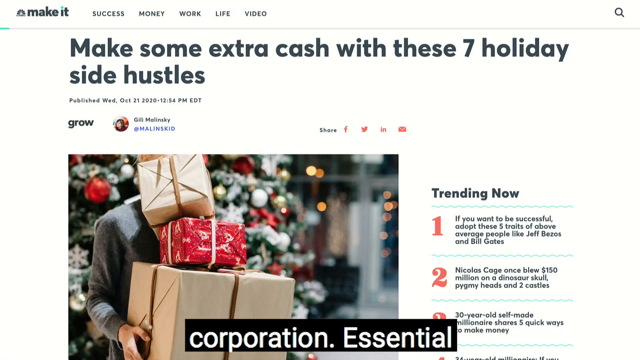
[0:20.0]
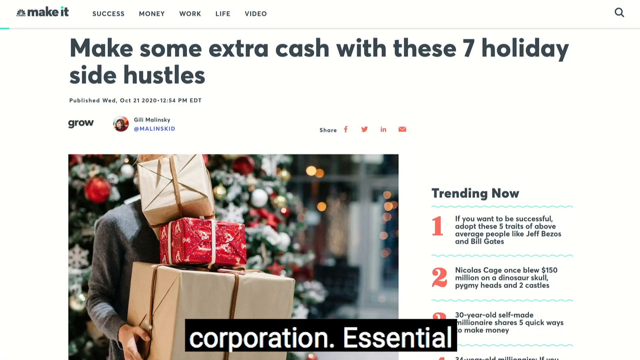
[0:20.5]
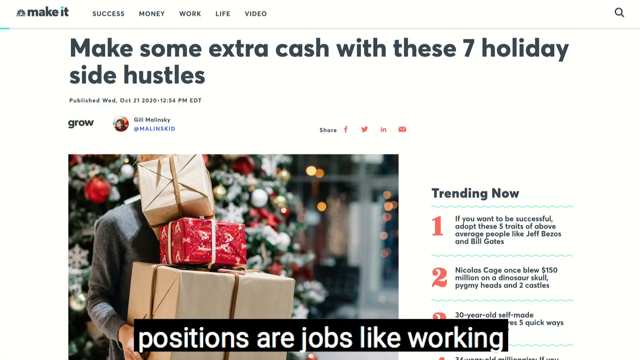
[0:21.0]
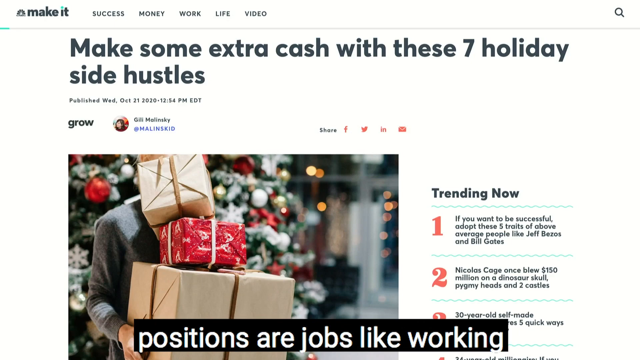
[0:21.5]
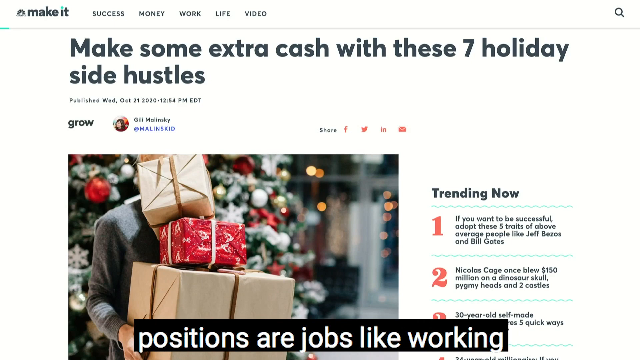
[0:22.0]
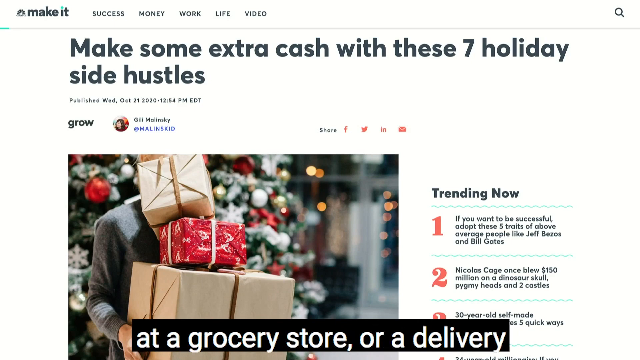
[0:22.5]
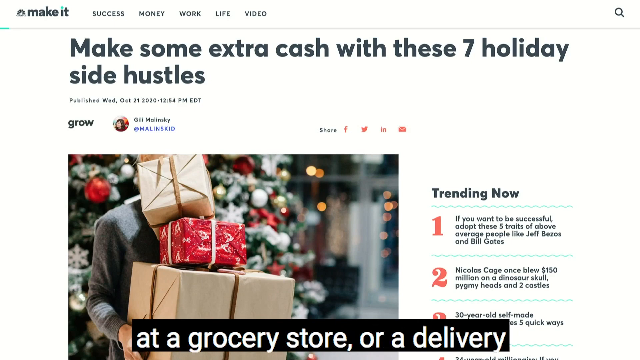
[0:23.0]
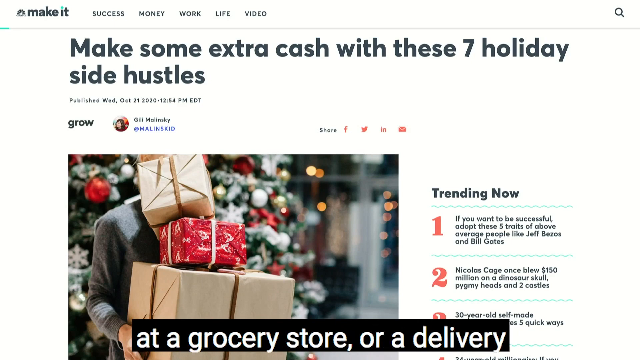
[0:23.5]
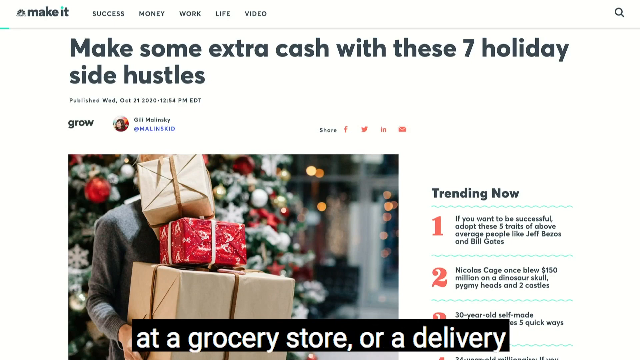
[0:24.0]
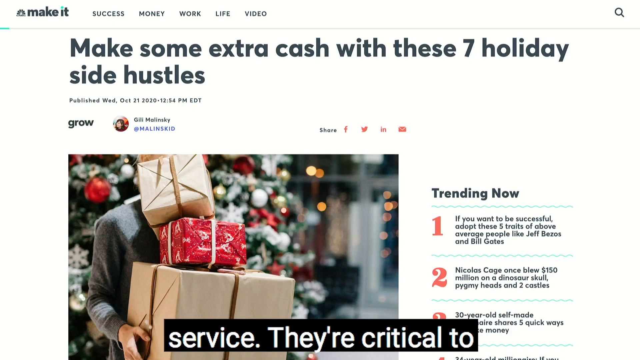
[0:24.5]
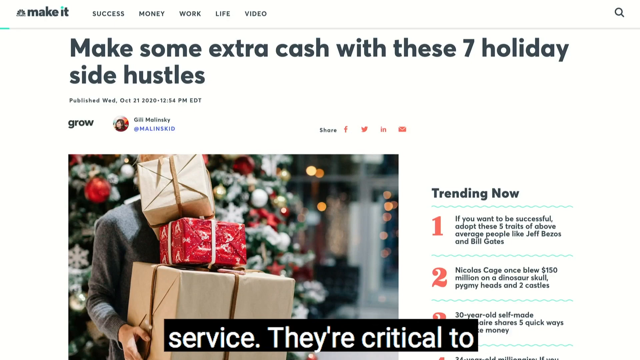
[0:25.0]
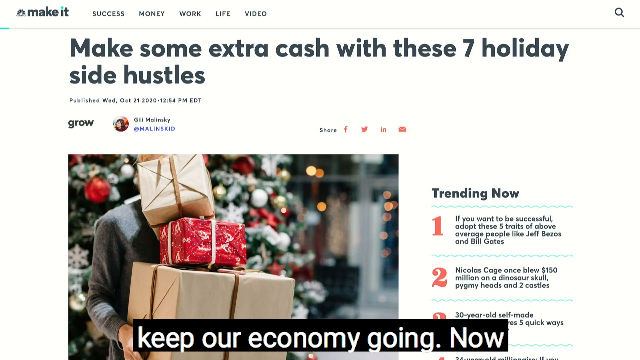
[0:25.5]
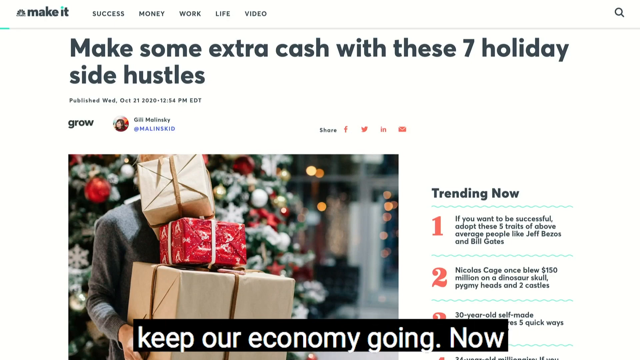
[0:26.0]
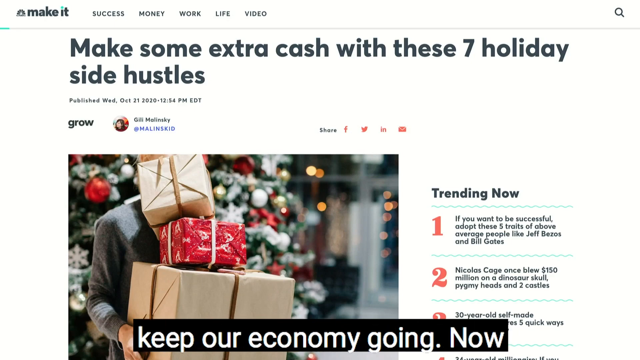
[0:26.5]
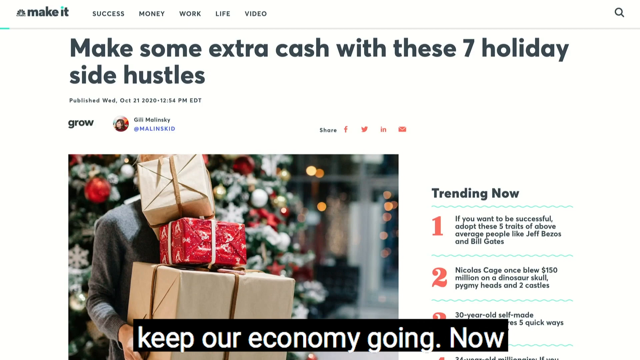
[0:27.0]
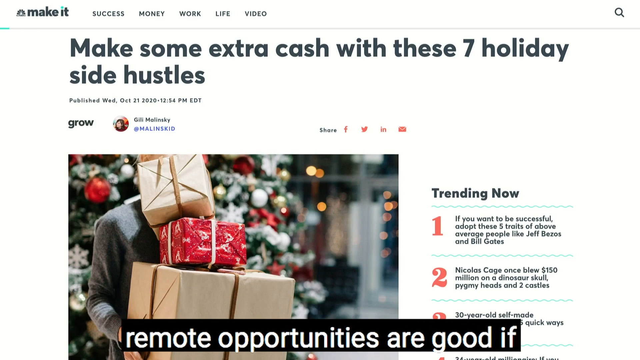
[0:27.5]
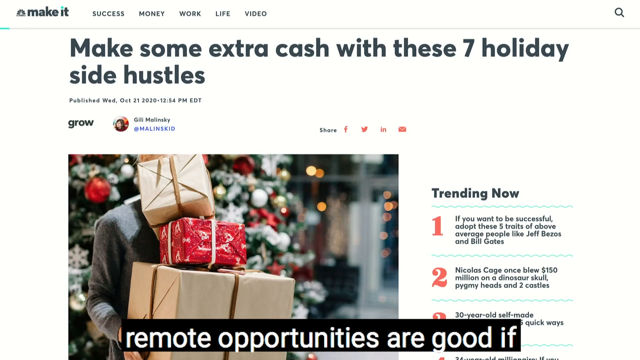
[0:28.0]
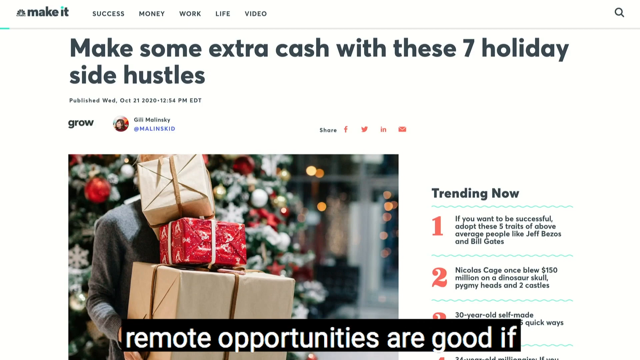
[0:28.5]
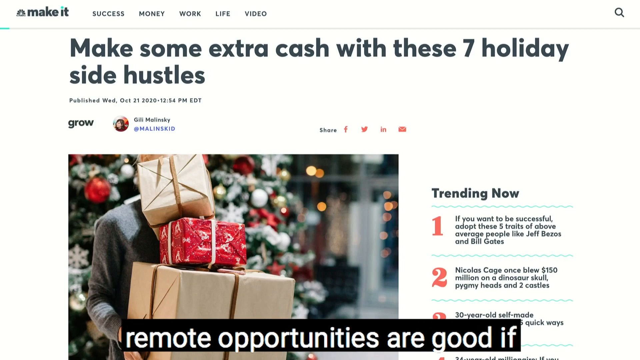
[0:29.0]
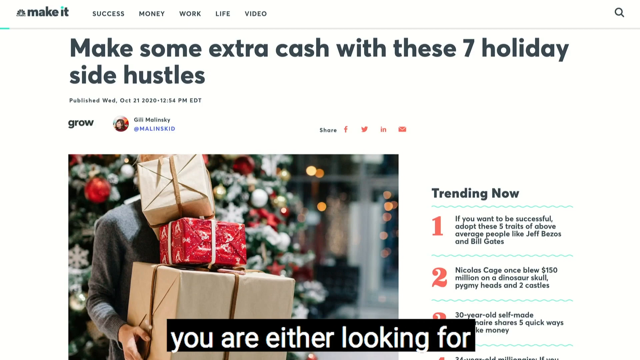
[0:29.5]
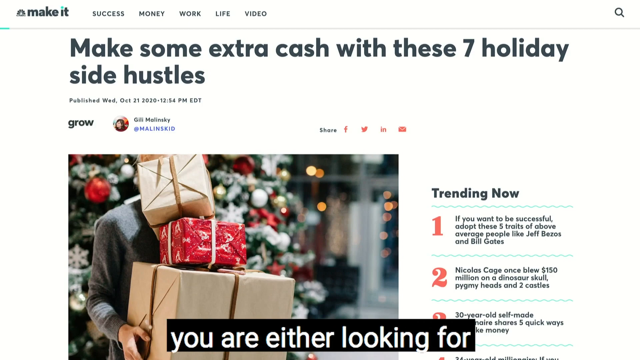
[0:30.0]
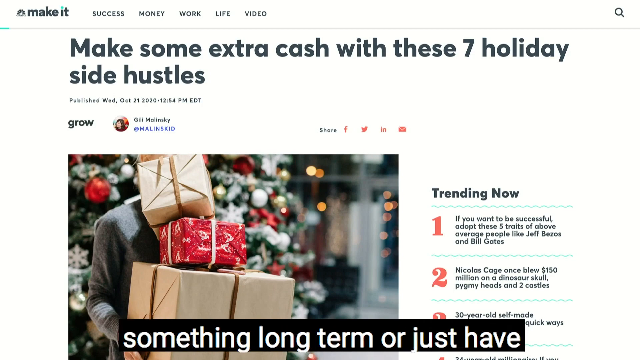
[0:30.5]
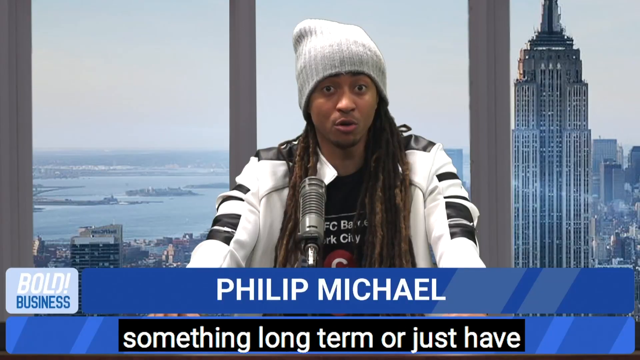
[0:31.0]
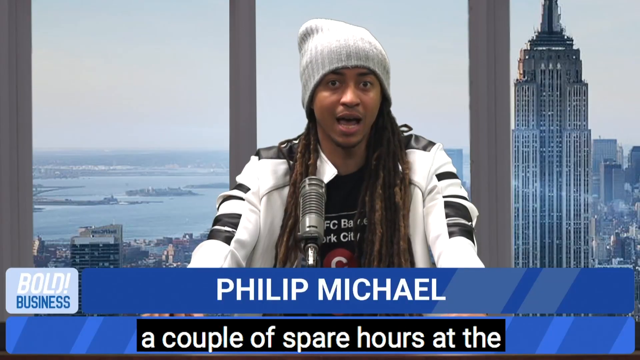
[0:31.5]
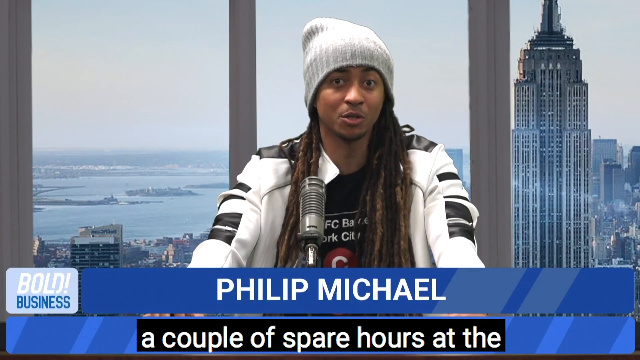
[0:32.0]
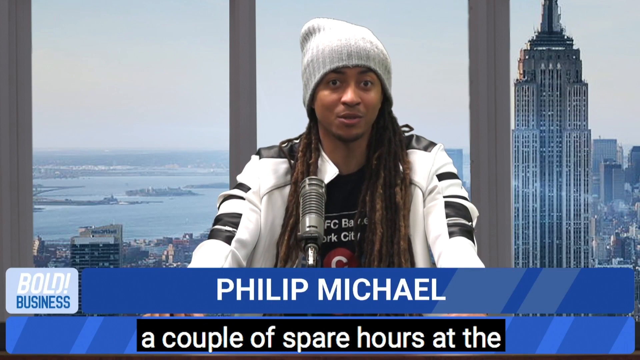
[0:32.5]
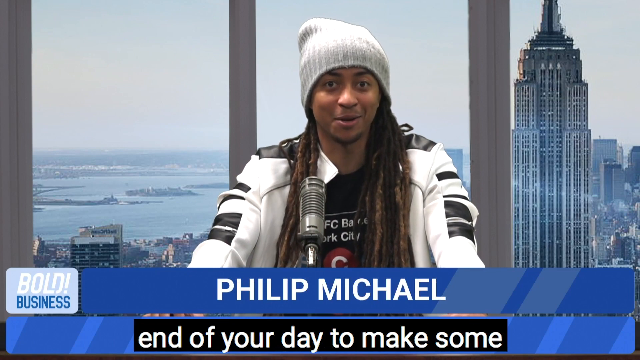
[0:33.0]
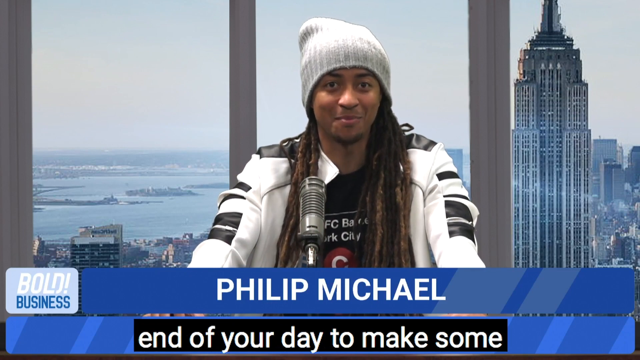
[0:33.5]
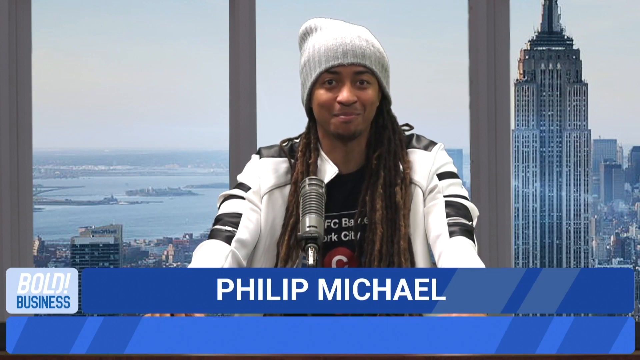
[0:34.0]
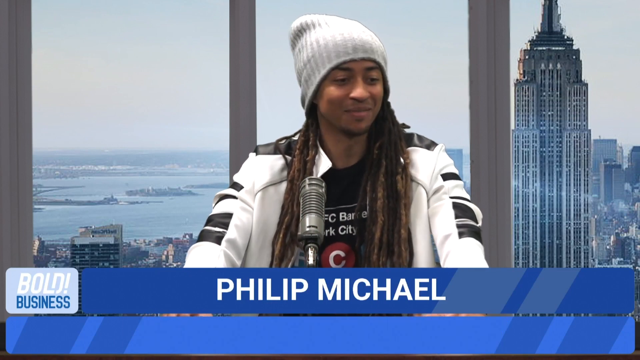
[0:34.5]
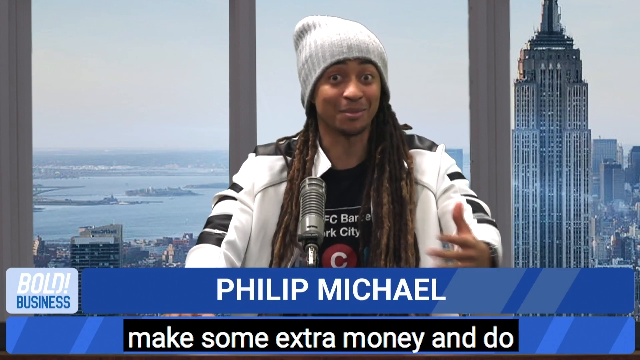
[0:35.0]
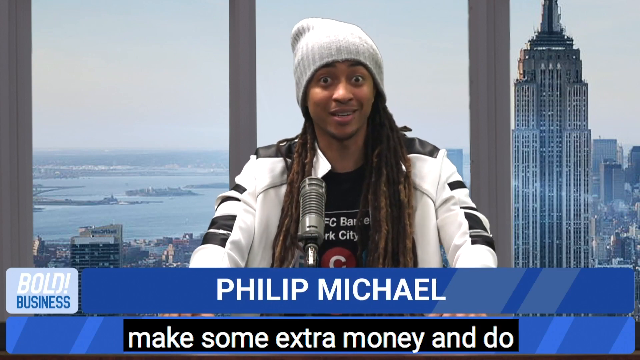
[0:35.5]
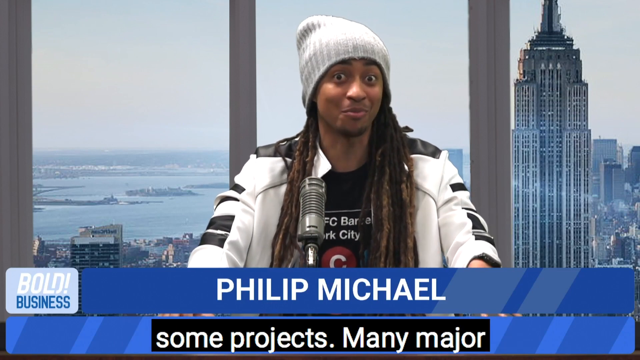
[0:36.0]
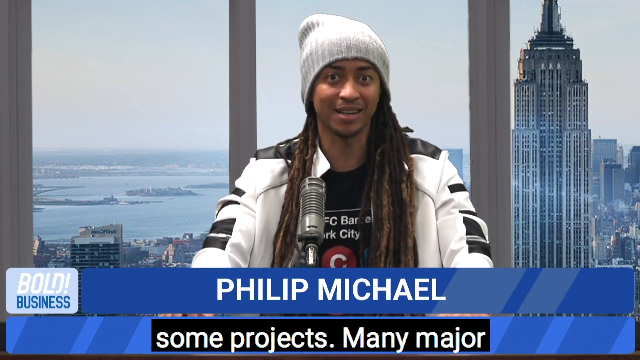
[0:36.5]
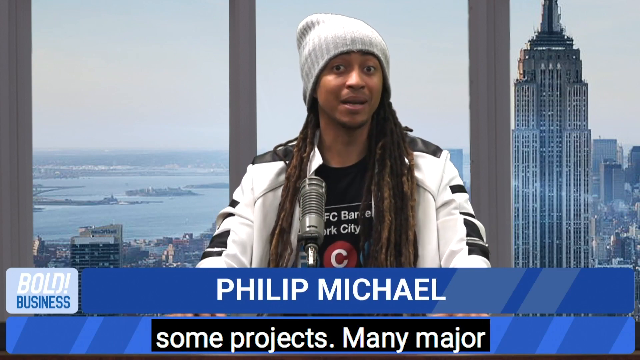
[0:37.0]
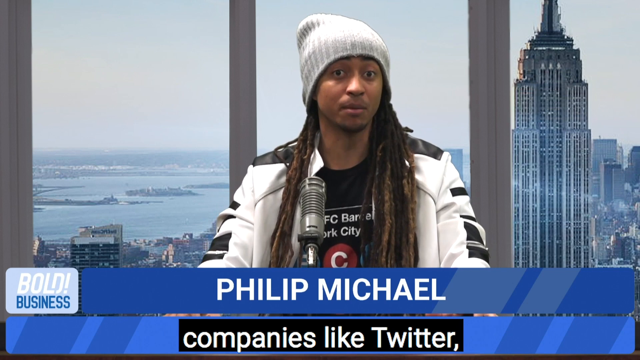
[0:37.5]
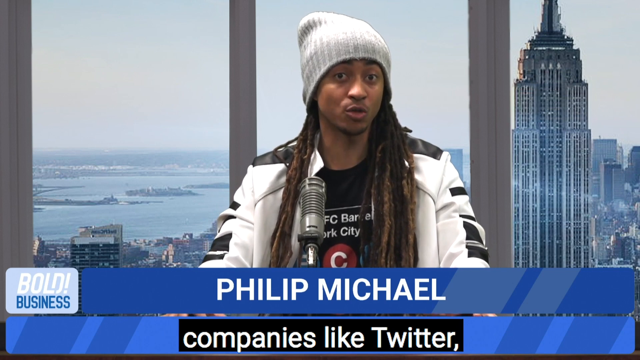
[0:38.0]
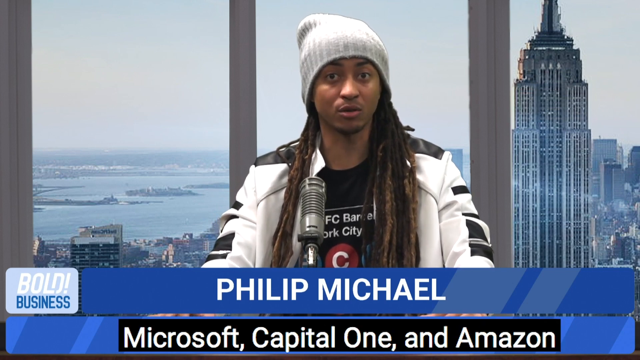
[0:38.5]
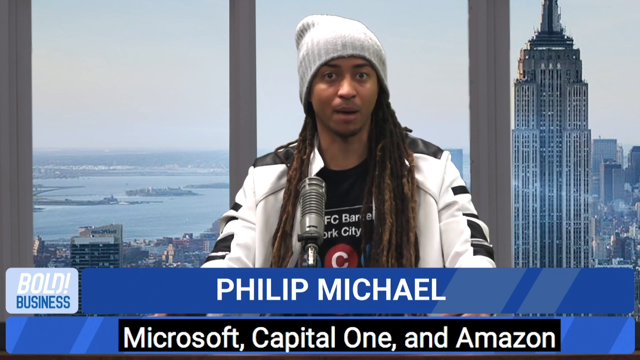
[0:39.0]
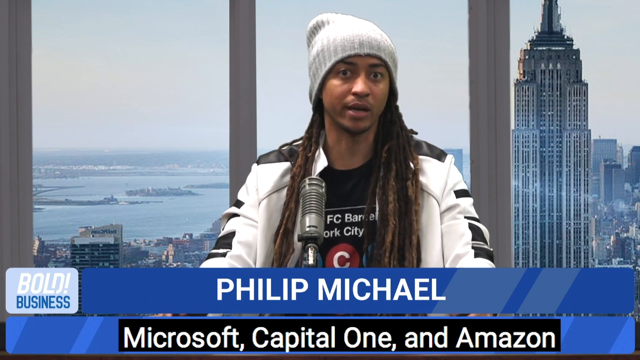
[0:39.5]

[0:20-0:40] A web page pulled up on a computer monitor is shown in a zoomed-in view. At the top of the screen are the words "Make It" in black bold letters, followed in a row by buttons reading "Success", "Money", "Work", "Life" and "Video". A search icon is in the far right corner. Beneath this, in the middle of the screen, bold black lettering reads "Make some extra cash with these seven holiday side hustles". The article's publication time is shown as Wednesday, October 21st, 2020 at 12.54 PM. Below is an image of a person walking in what appears to be a mall at Christmas time, holding three gifts in their hands. The largest gift is at the bottom of the pile; the middle gift is medium-sized, wrapped in red and white paper with a white ribbon tied around it; the gift on top of the stack is wrapped in beige paper with a gold ribbon wrapped around it. Toward the right side of the screen are the words "Trending Now", with three separate items listed as trending. The scene then changes back to the host, Philip Michael.